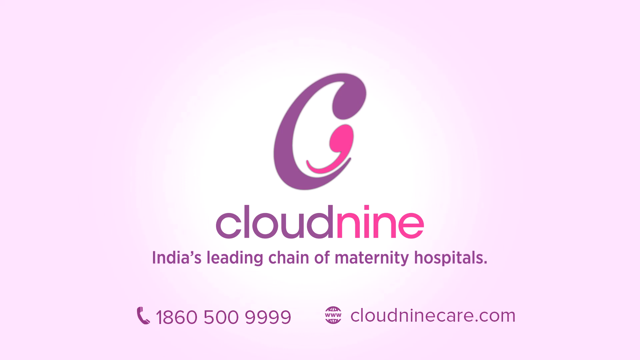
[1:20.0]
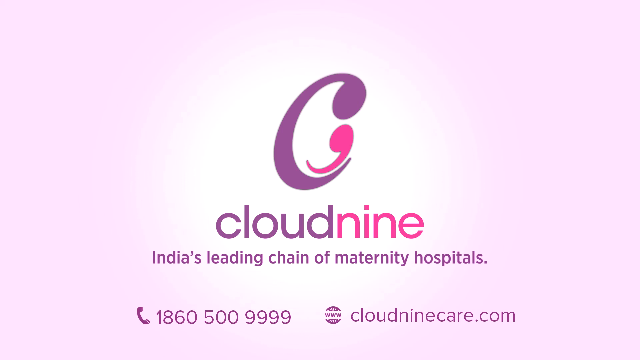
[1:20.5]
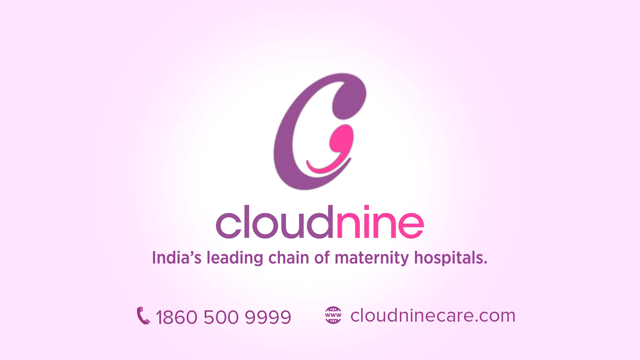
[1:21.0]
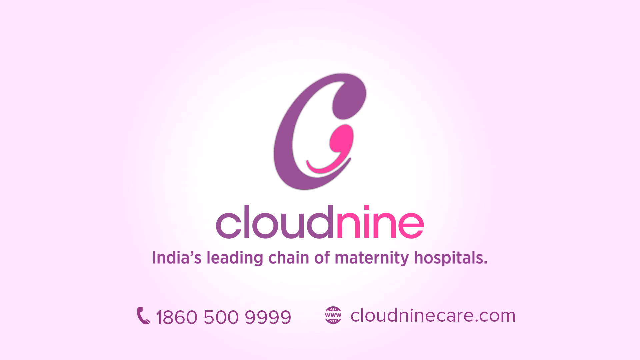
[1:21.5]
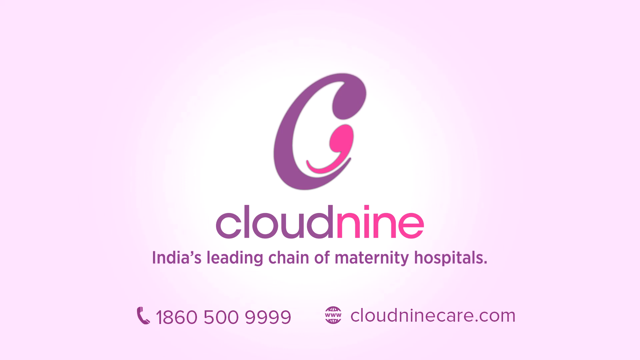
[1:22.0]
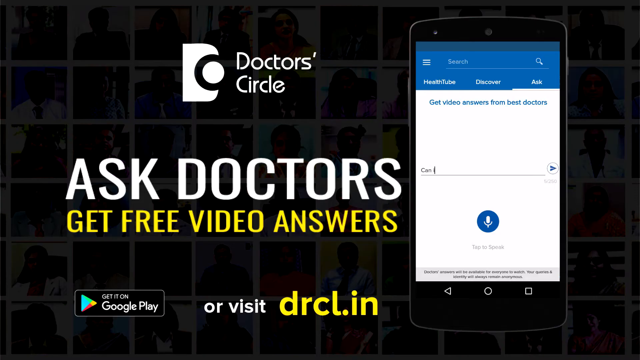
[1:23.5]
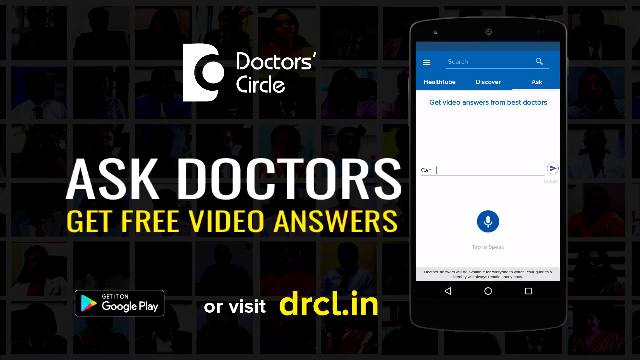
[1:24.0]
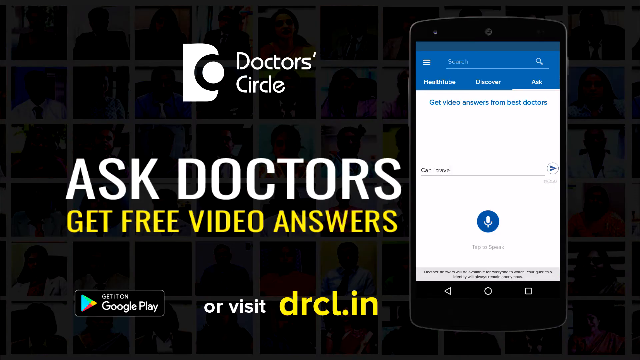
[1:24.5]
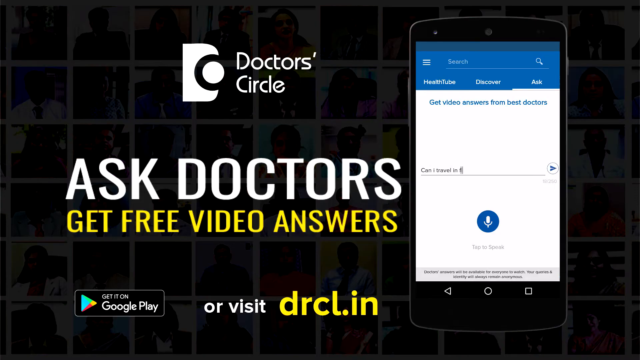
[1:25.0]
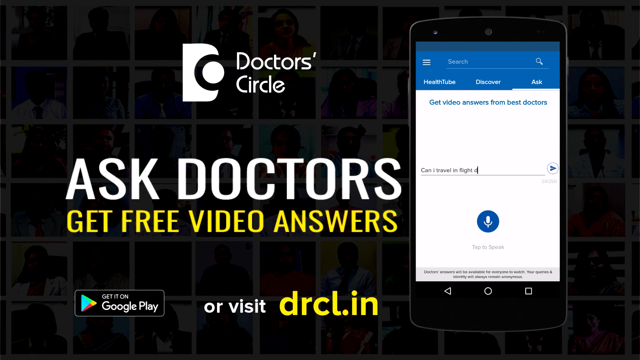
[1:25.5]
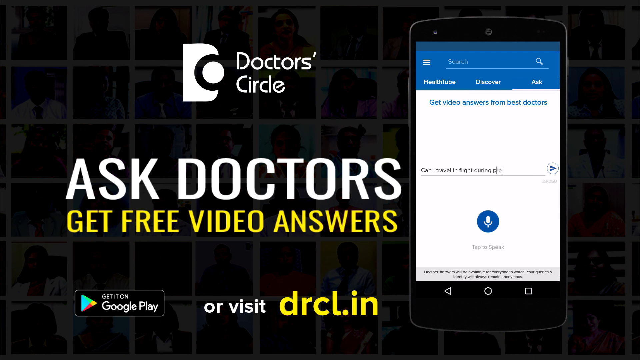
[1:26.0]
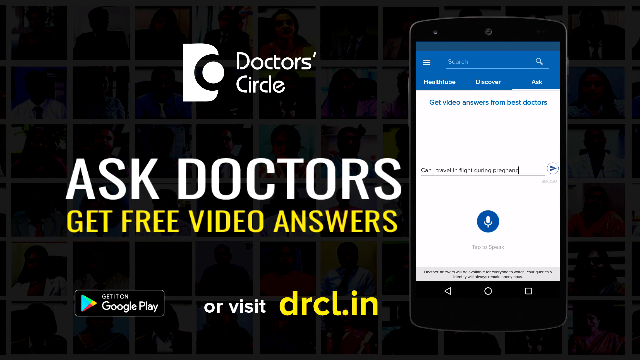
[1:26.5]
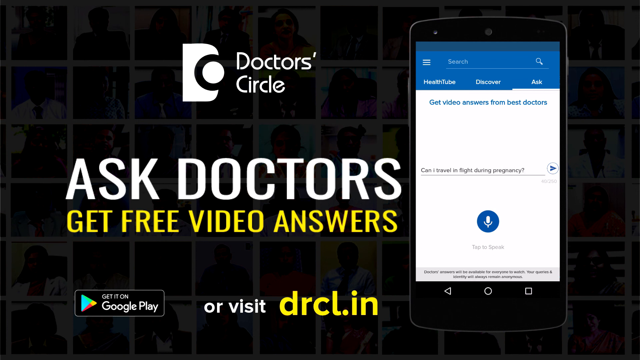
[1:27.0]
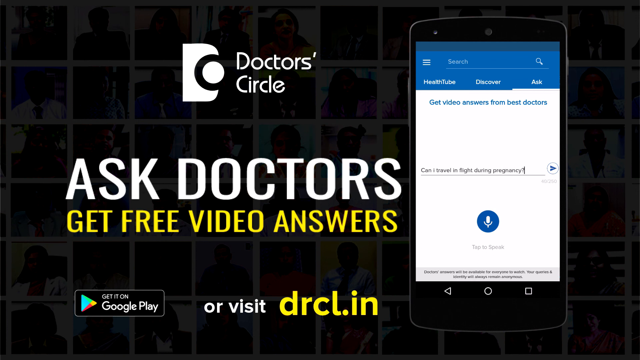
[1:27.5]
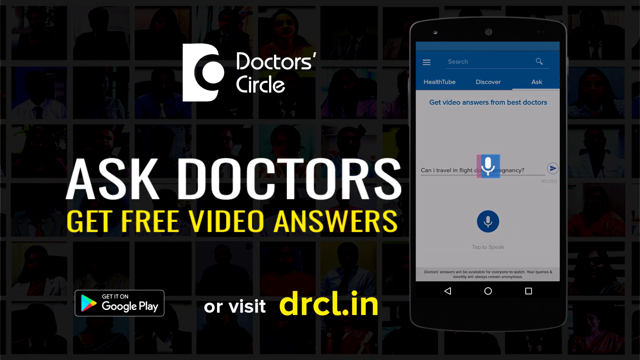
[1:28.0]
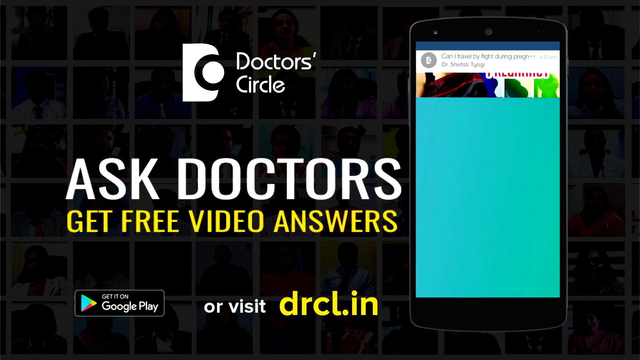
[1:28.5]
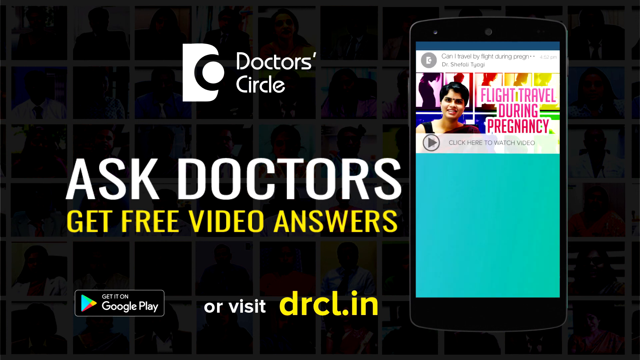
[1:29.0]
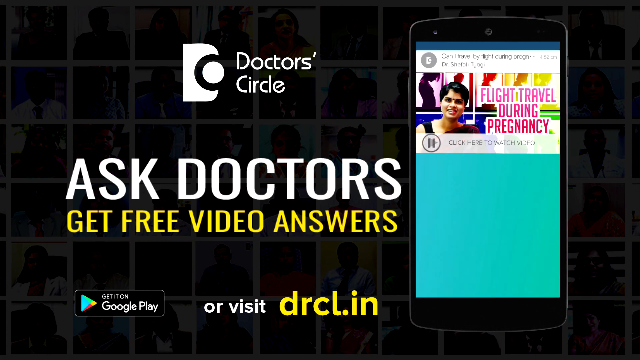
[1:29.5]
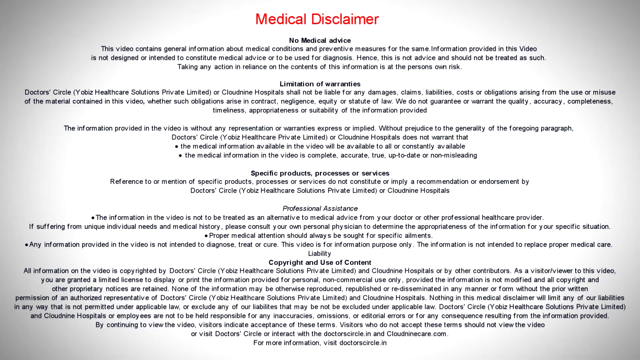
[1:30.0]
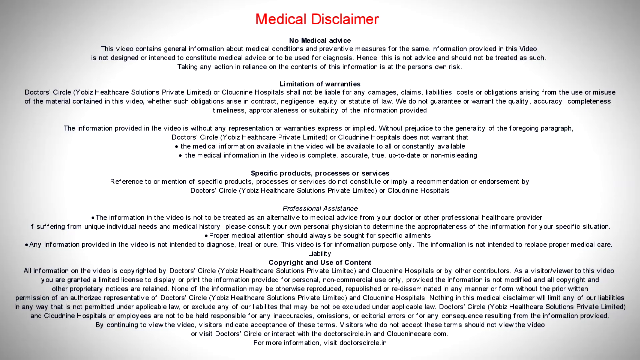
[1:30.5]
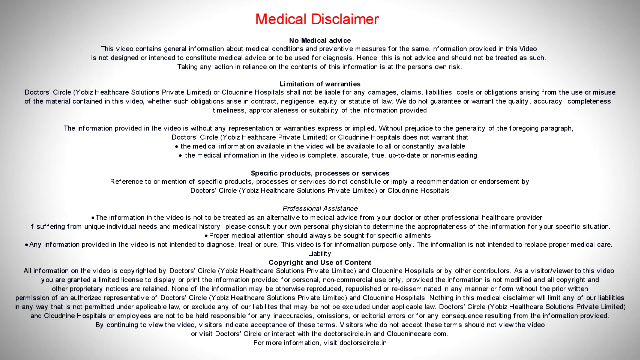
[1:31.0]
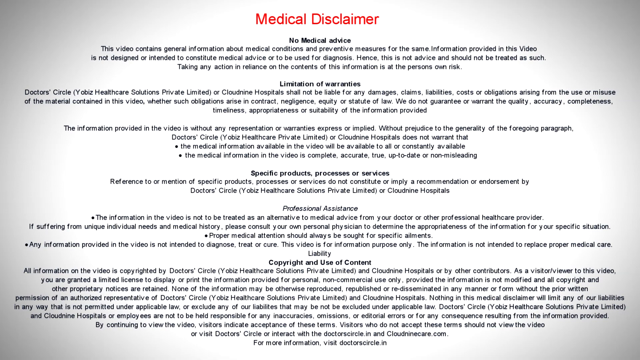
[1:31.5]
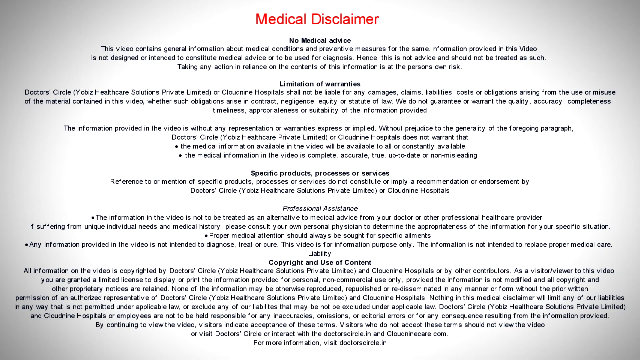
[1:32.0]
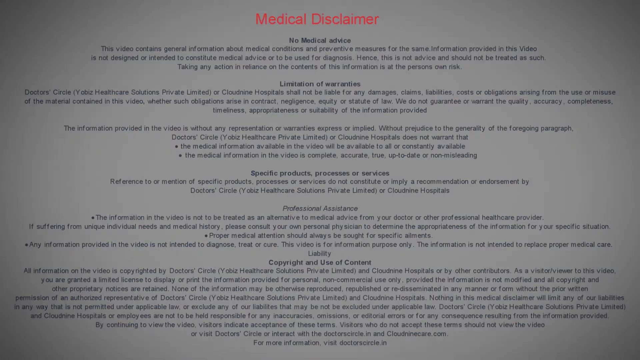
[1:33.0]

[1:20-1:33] A closing graphic is centered on a light purple background: a purple C with a little pink doodad beside it, "cloud" in purple and "nine" in pink, and in purple "India's leading chain of maternity hospitals." A phone number has a little purple phone icon beside it, and next to that is a globe icon with a website. The graphic lingers, then switches to a different closing graphic on a black background. On the left is a black and white logo reading "doctor's circle." Below it, in white, is "ask doctors," then in yellow "get free video answers," in white "or visit," and in yellow "drcl.in." To the left of that is a little logo for getting it on Google Play. On the right side of the screen is a kind of simulated, cartoony-looking cell phone. It has a blue search bar at the top with white text reading "health tube discover ask," then a white background with blue font reading "get video answers from best doctors." It looks like a simulated version of the application: something is typed in, "can I travel in flight during pregnancy?", with a little microphone icon, possibly showing what the app looks like. Colorful graphics then come up on the simulated phone screen. Finally a medical disclaimer appears, with "medical disclaimer" in red at the top and a giant wall of black text about the legal limitations of the service.